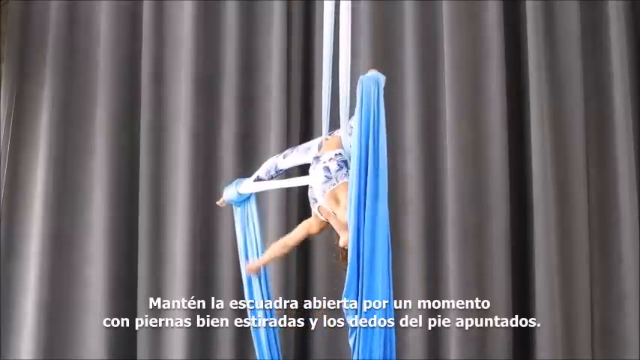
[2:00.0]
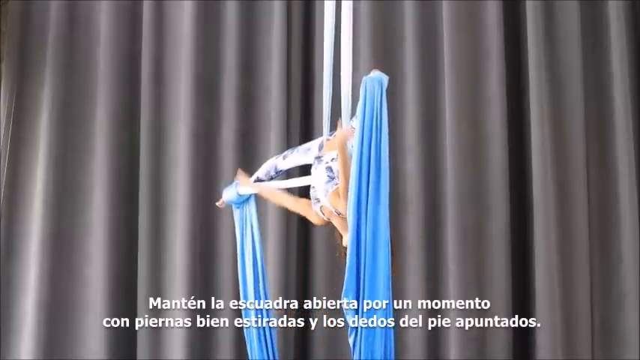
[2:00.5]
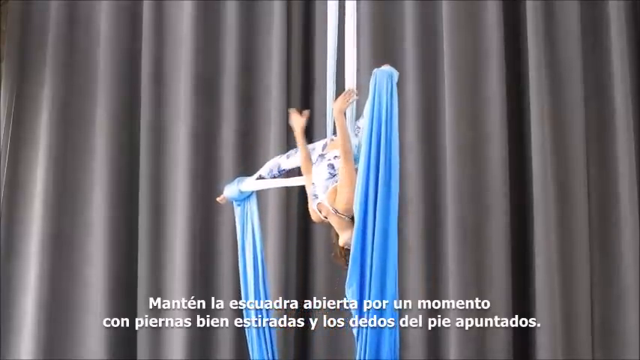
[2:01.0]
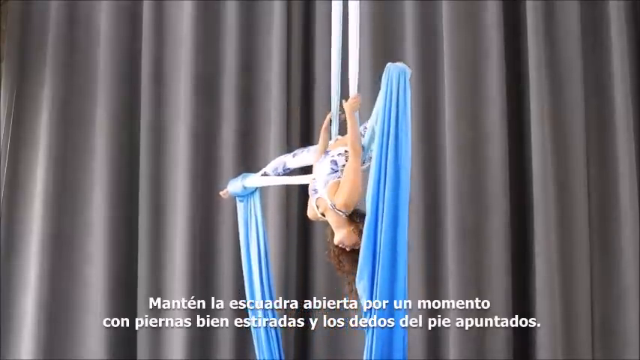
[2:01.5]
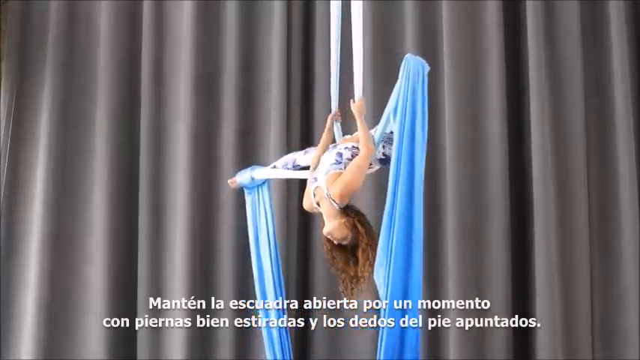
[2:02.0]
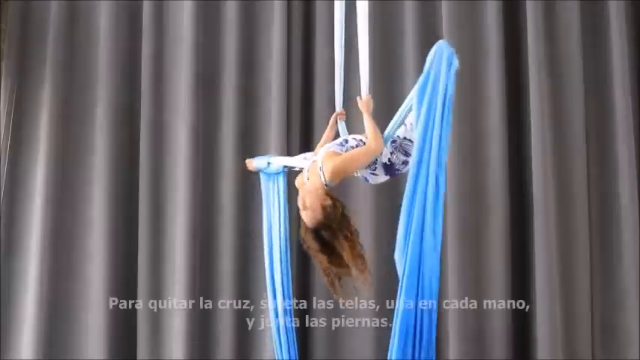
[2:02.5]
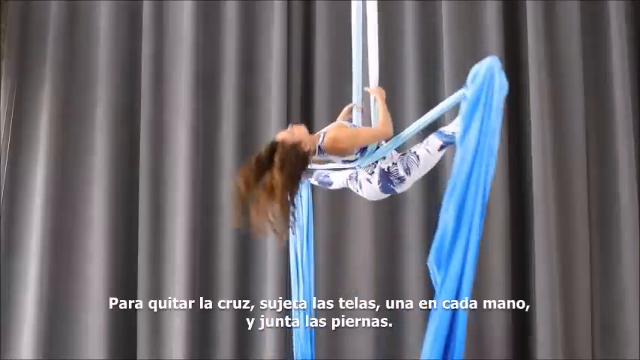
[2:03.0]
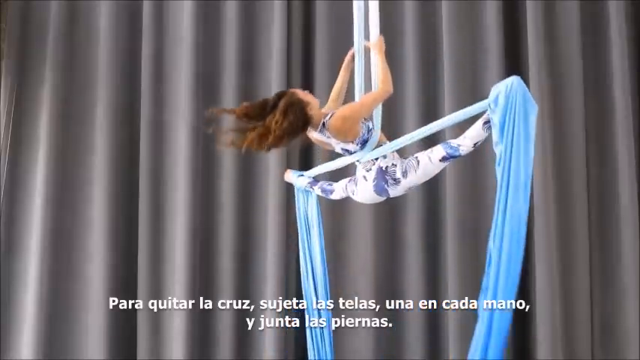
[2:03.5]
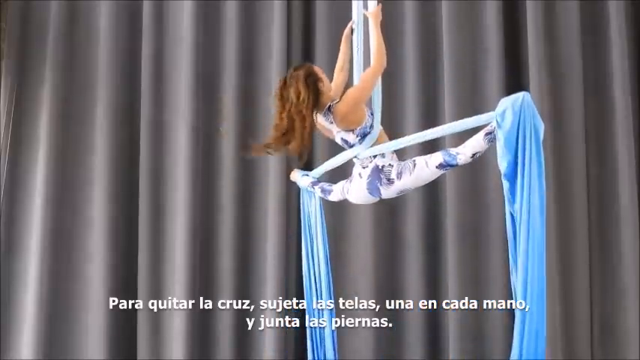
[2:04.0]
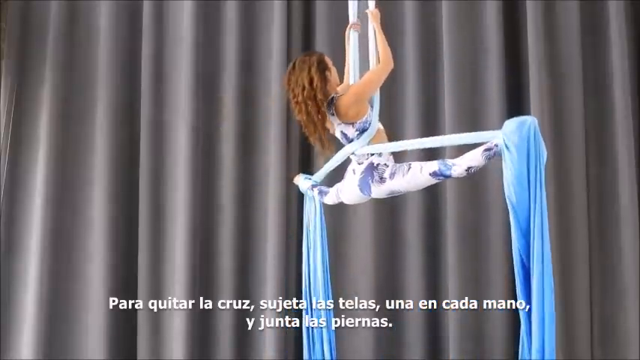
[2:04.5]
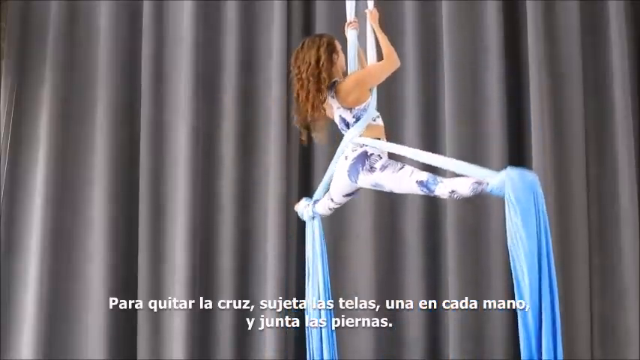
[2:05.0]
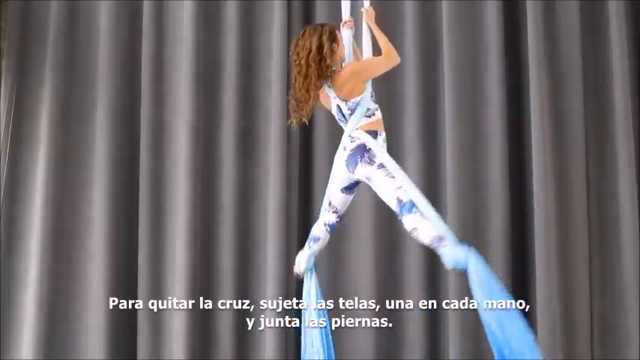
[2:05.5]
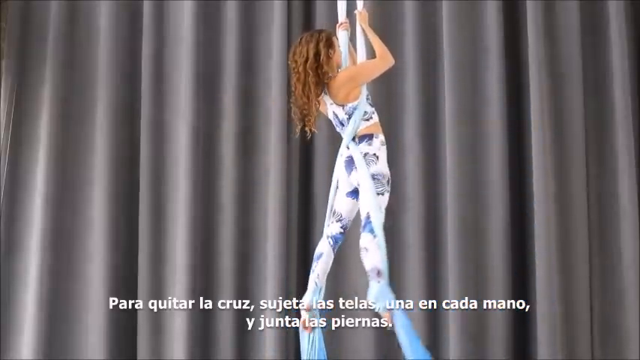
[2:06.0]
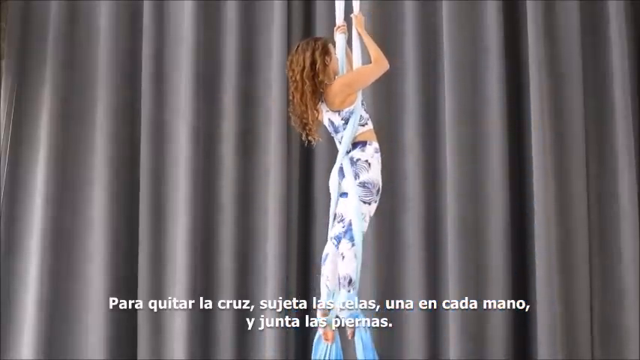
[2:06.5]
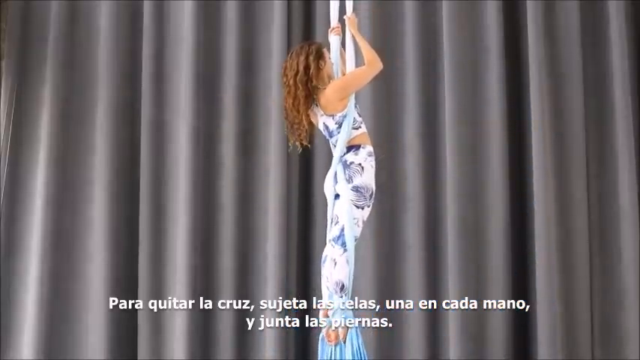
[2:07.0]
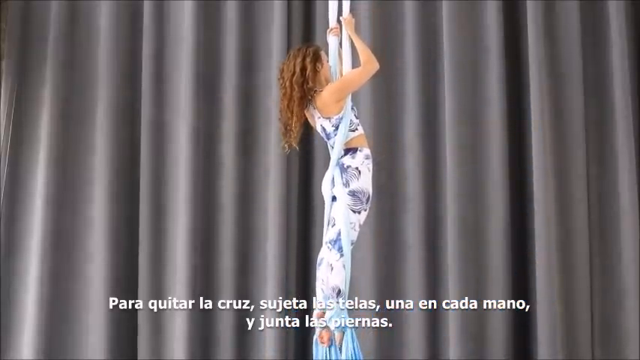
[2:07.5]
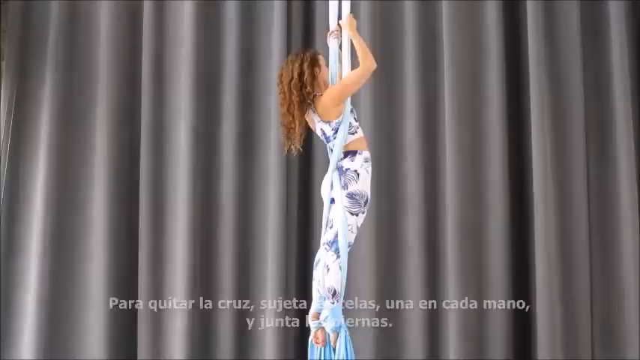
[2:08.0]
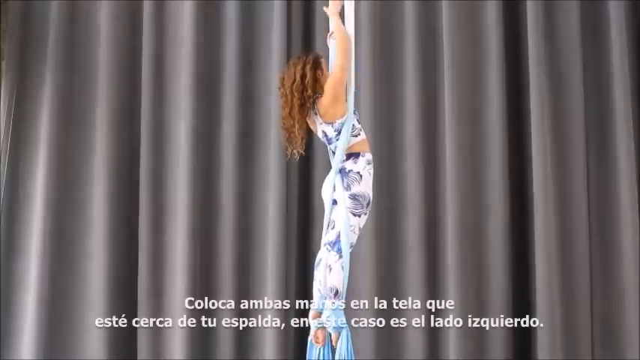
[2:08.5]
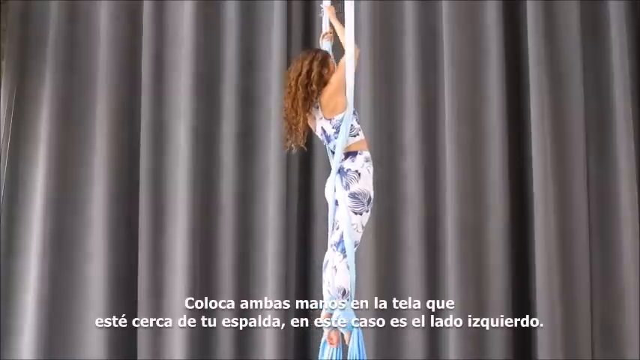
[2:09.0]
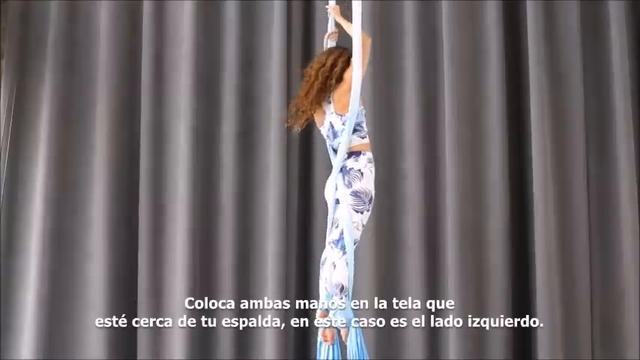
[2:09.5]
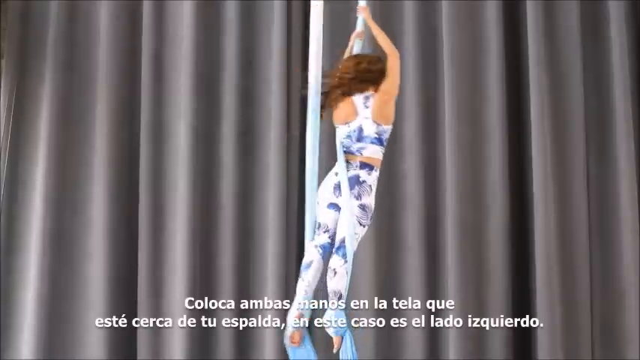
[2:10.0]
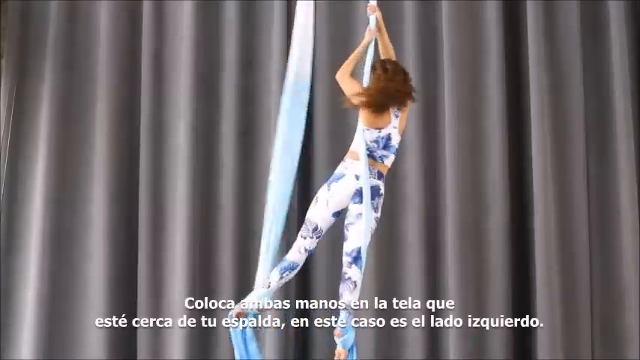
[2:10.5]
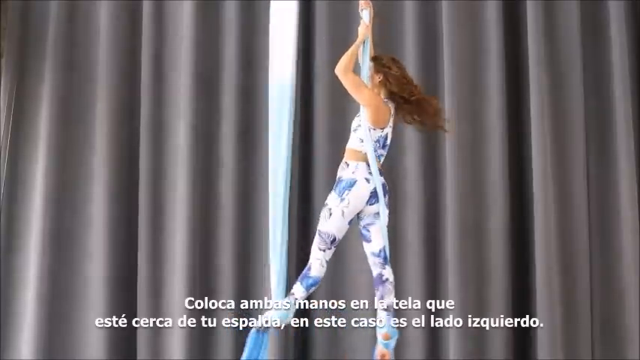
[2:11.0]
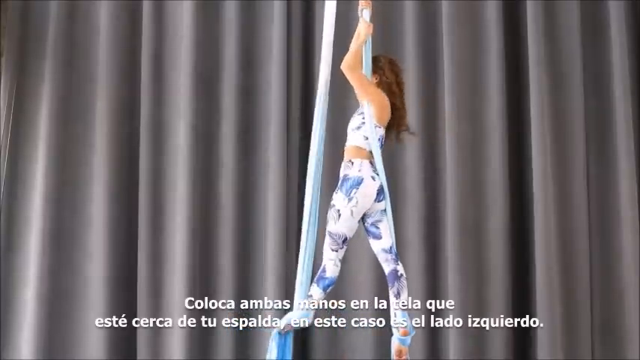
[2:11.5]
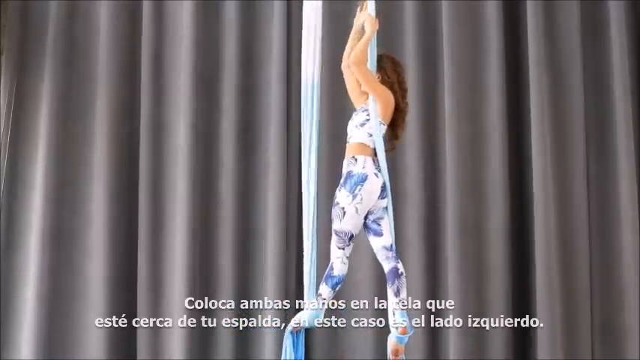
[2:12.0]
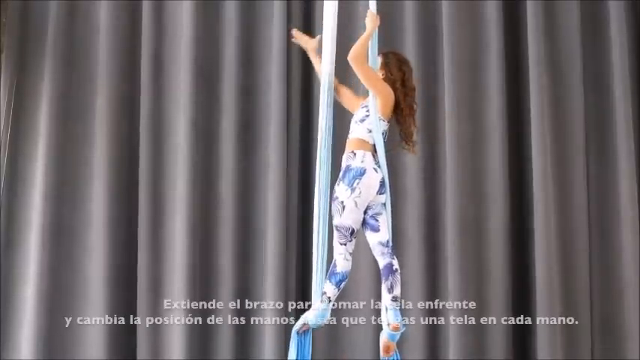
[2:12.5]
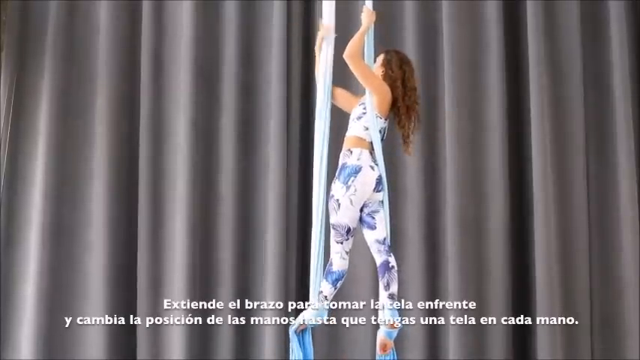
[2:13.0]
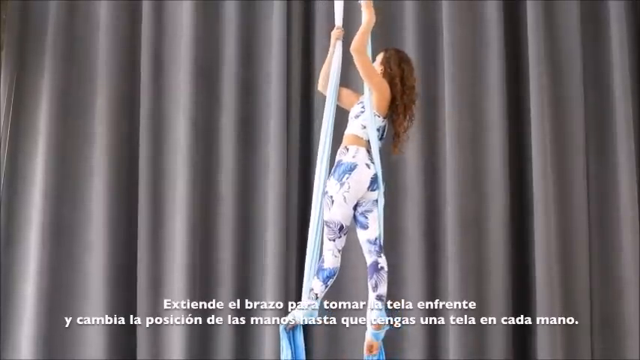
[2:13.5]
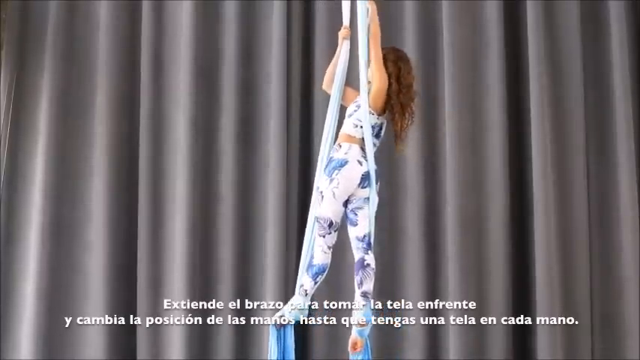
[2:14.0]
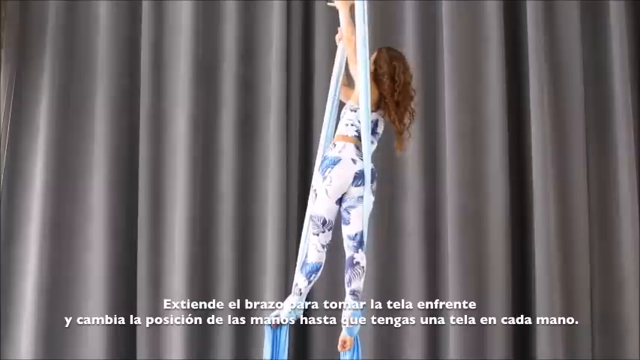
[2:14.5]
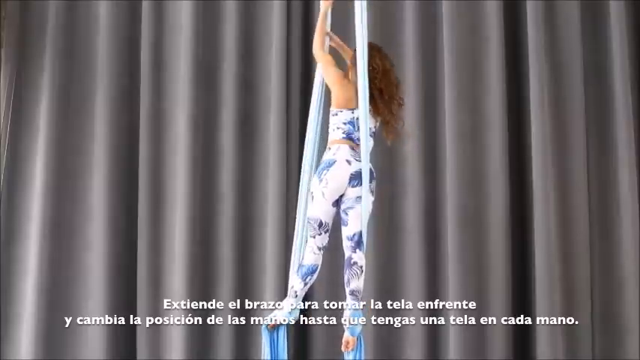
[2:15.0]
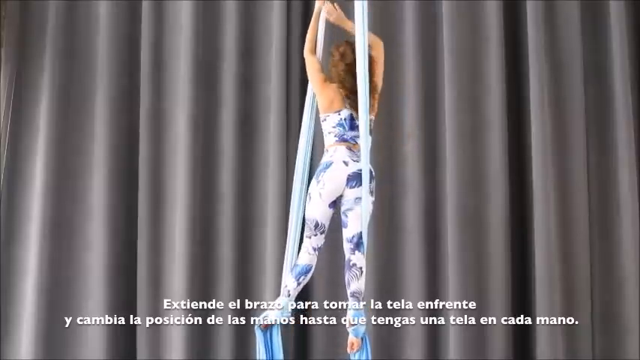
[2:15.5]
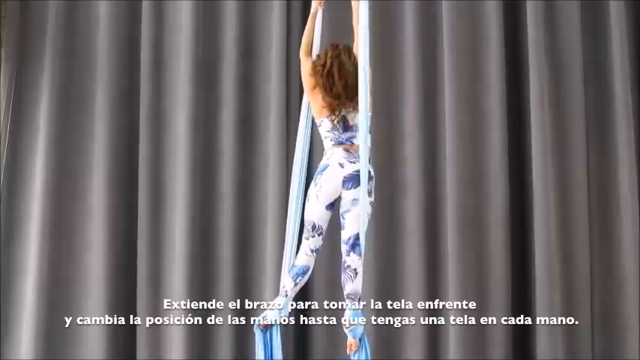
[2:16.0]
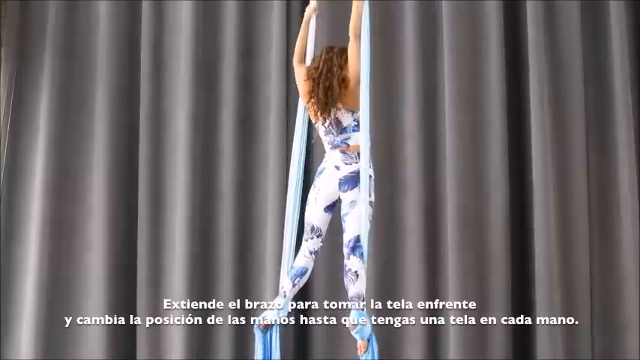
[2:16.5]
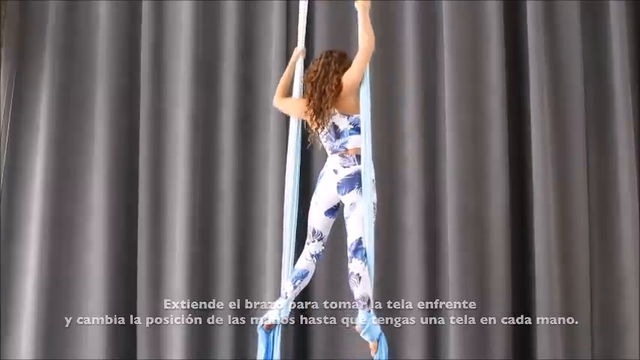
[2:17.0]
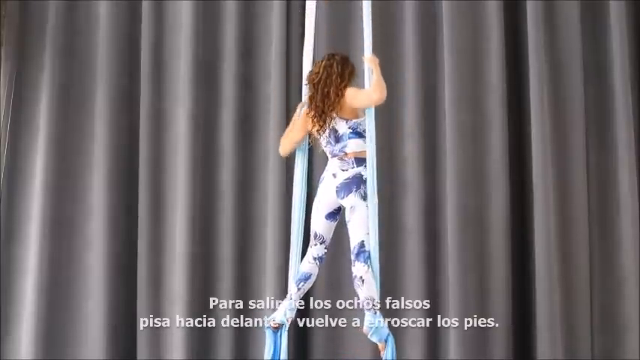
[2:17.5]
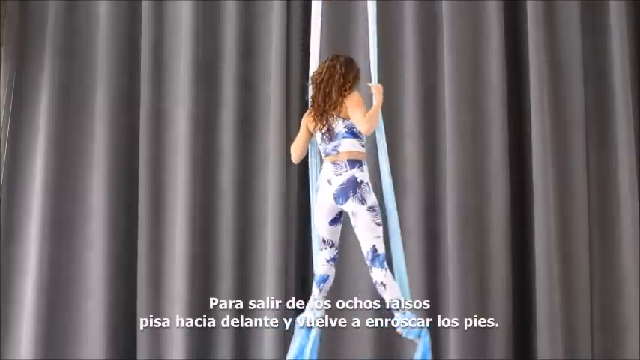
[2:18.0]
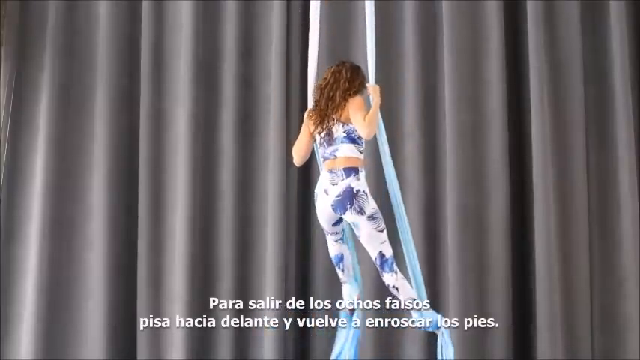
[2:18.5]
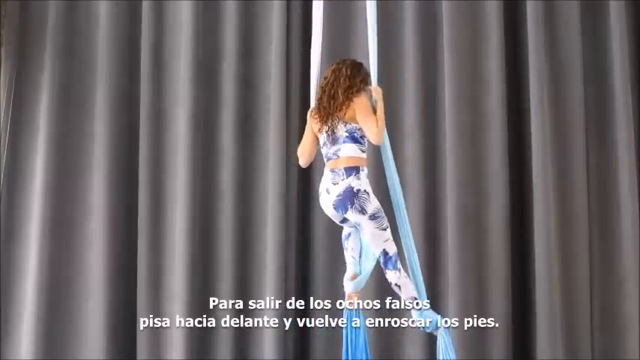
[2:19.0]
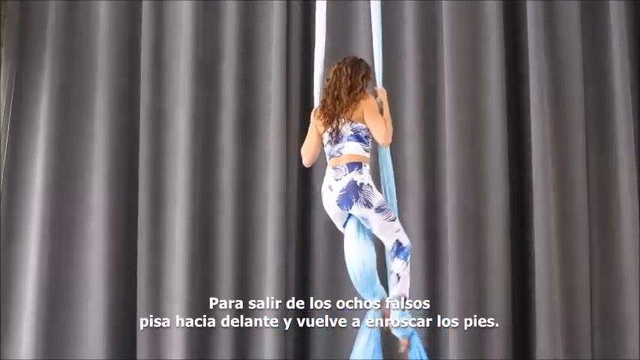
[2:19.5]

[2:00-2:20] A woman hangs upside down with two pieces of long, stretchy blue material that stretch way down, using the material on both sides. The curtains in the background are gray. The material is lighter on the upper, attached portion, and toward the bottom it is more of a periwinkle blue. She does a flip, then carefully pulls herself up and pulls her legs in so they are no longer spread wide. The footage is then almost in slow motion, showing the little movements she makes to change her position in the blue material, with the two attached strips coming down.